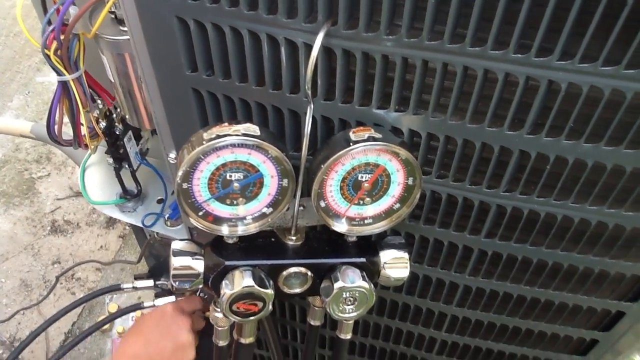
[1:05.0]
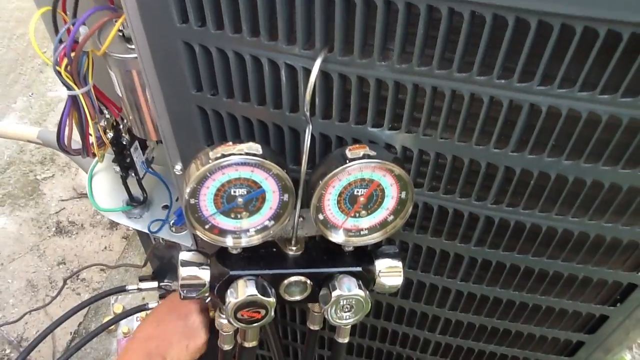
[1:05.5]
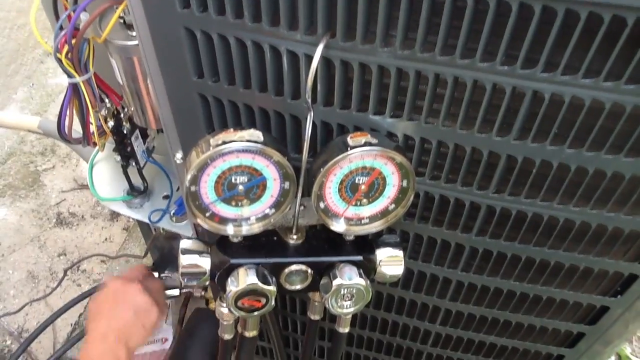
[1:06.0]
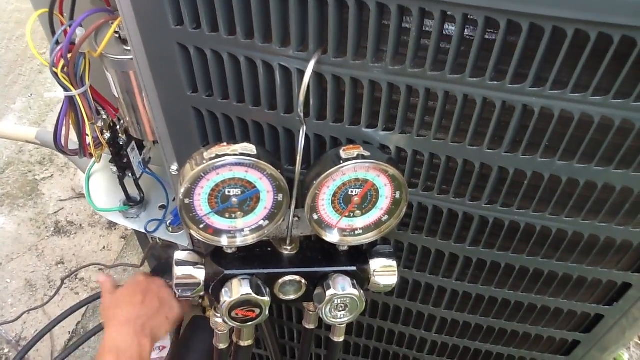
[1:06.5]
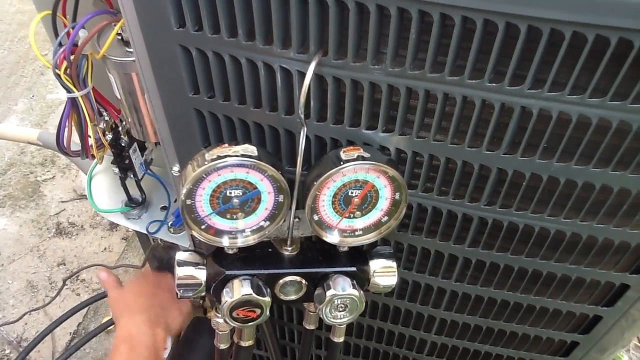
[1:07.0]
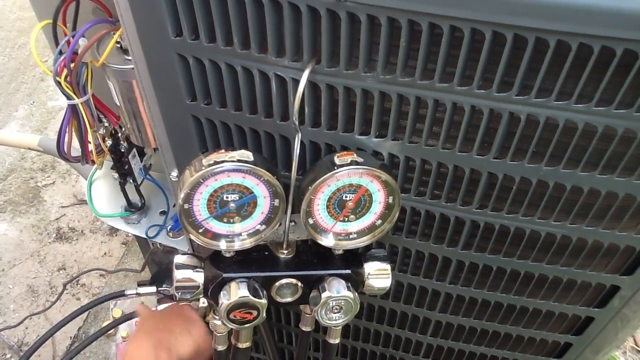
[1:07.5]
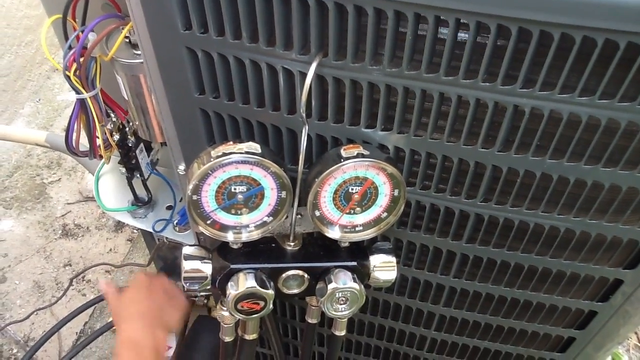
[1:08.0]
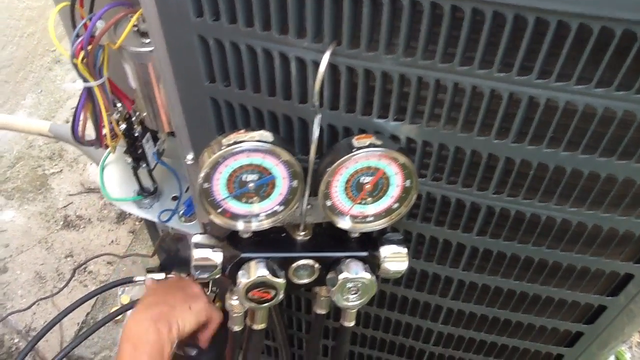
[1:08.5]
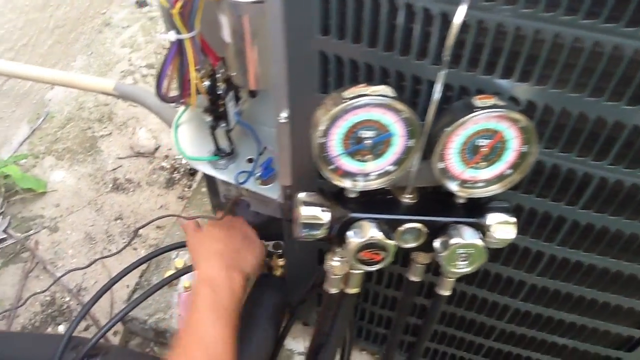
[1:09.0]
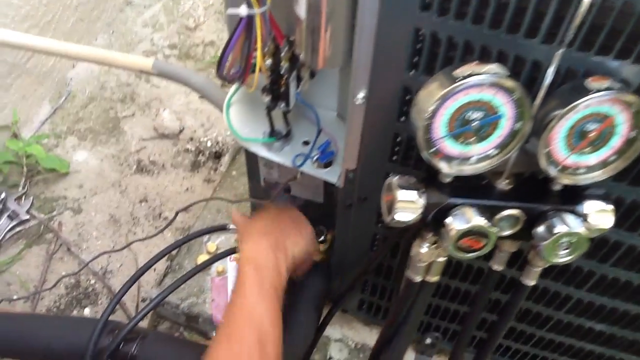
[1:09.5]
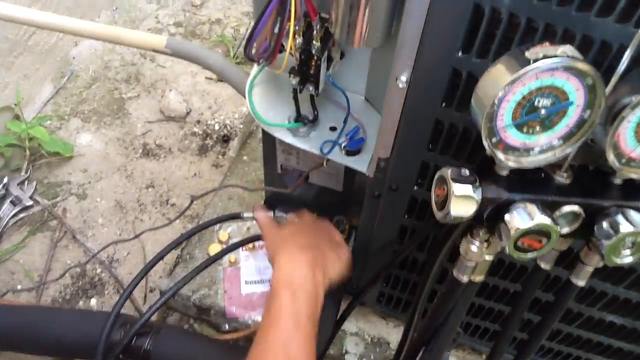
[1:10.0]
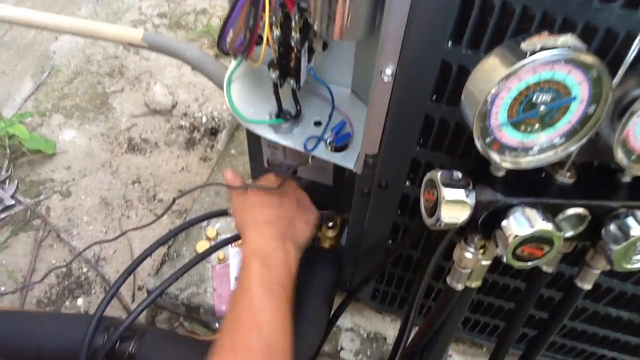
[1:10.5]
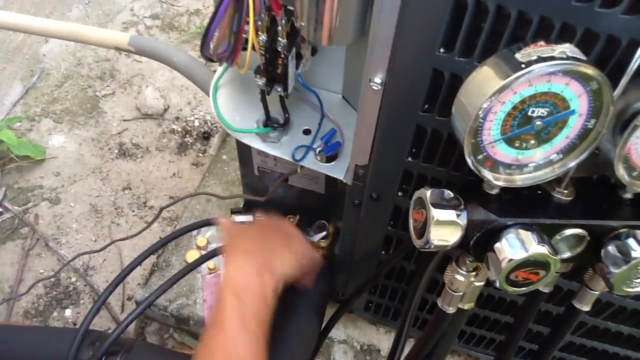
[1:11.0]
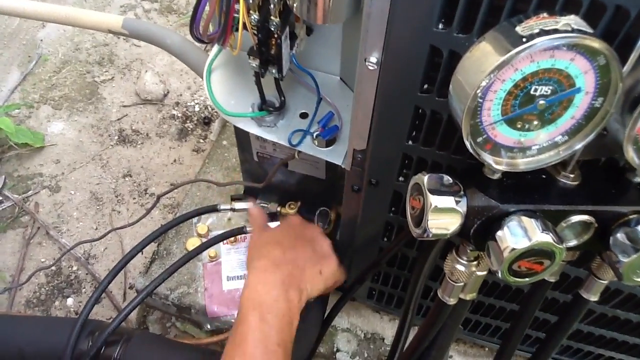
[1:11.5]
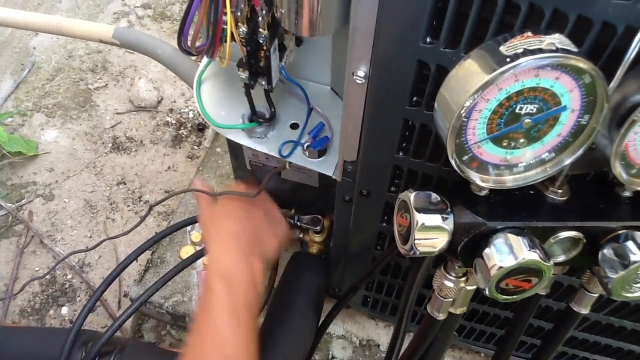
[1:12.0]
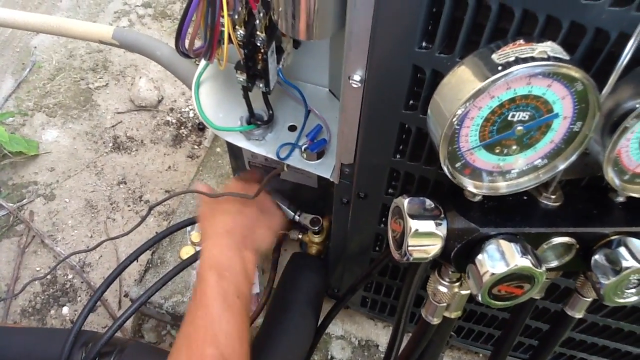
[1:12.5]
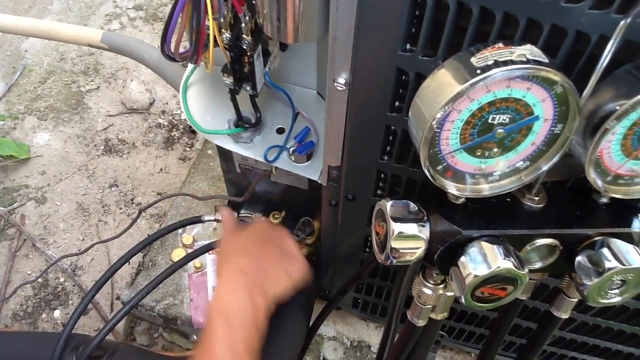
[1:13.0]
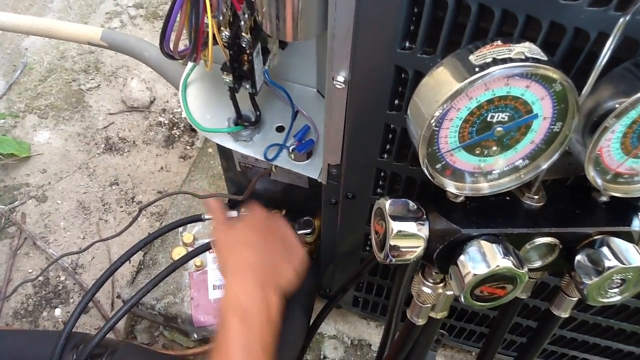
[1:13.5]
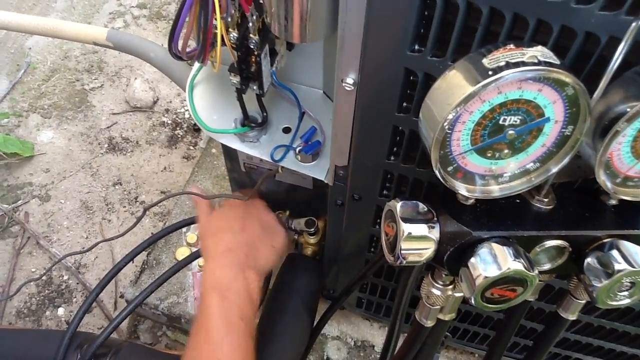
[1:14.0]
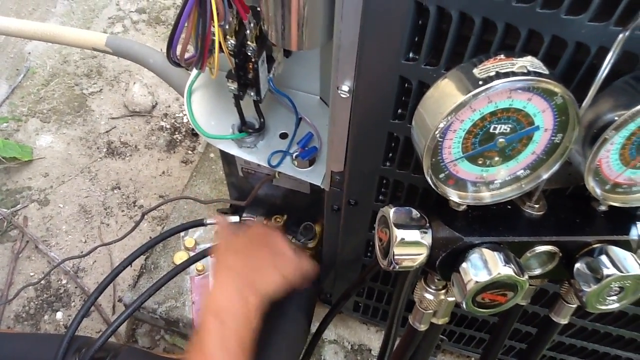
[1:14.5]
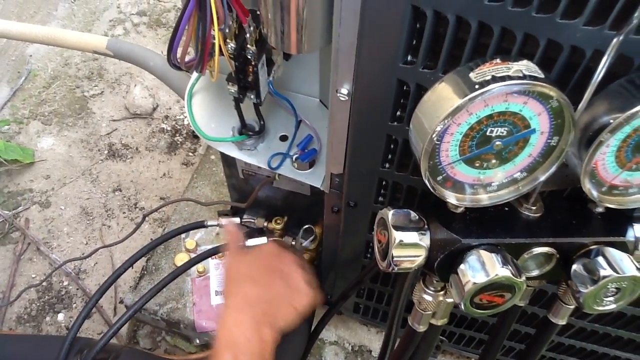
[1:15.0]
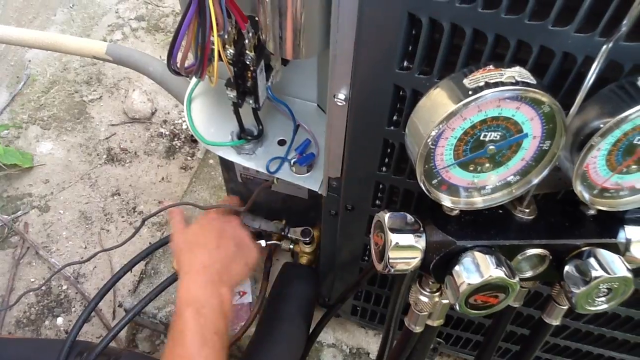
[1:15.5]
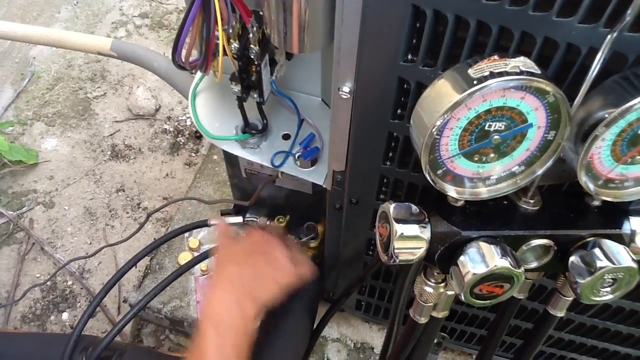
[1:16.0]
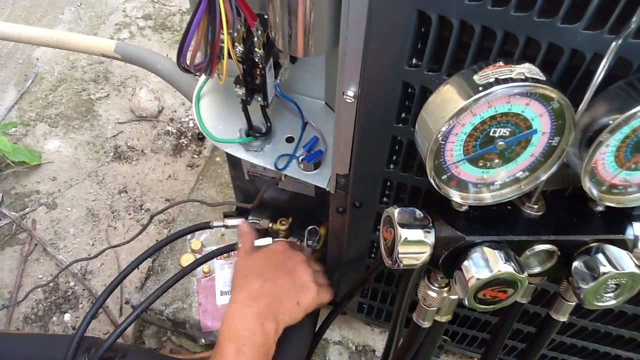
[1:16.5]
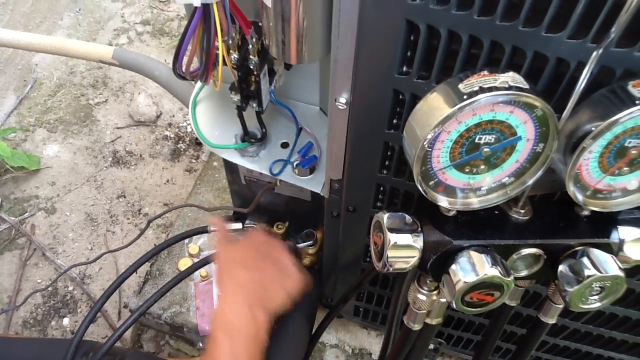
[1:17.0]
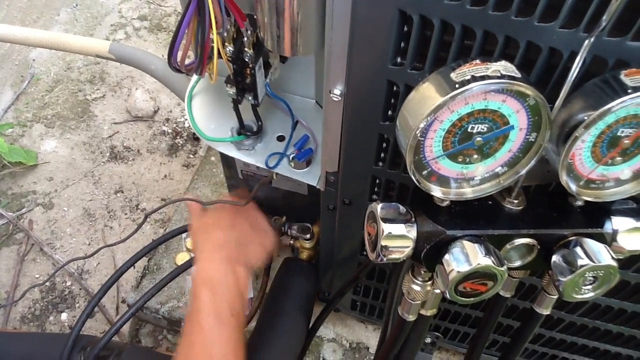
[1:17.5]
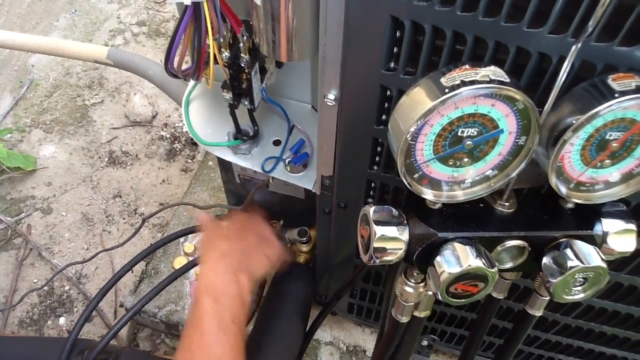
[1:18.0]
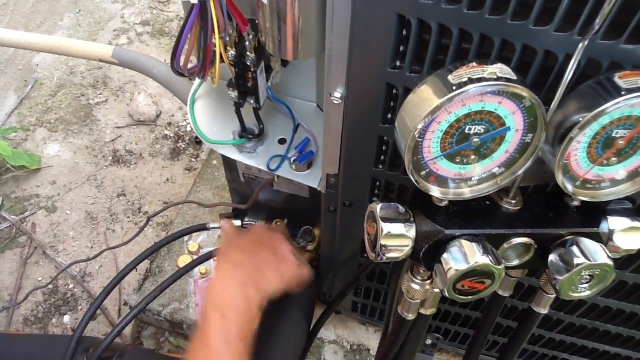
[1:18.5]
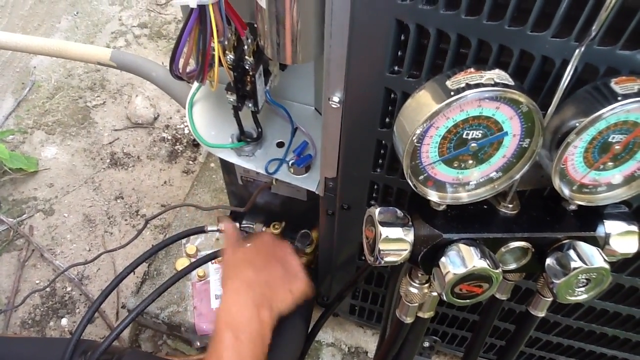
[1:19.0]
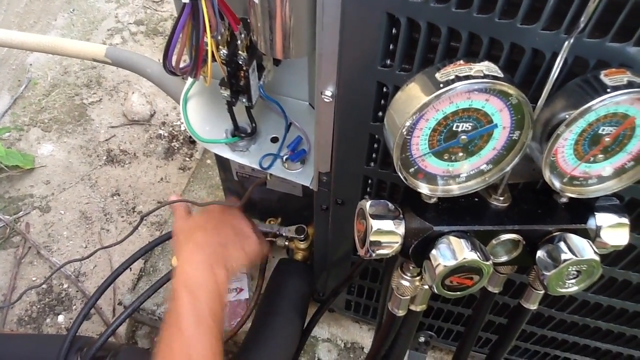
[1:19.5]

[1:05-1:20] The side of an HVAC unit with vents is shown. A gauge with two circular silver dials possibly shows how much air, or gas such as Freon, is going into the machine. A man's right hand tightens or loosens some screws at the bottom of the front or side of the machine. The inside electrical wires are visible, as if a cover was taken off, and the gauge hangs on the side; maybe Freon or something is being inserted into the HVAC machine. A white tube goes out to the side, maybe a drain pipe, and the ground is visible at the bottom and to the side. There may be some ads, maybe something blue in the lower left. In the upper left corner is the text "David Jones" and "quickest way to pump down unit", so it looks sort of like a YouTube video. Something also shows up on the lower right side.